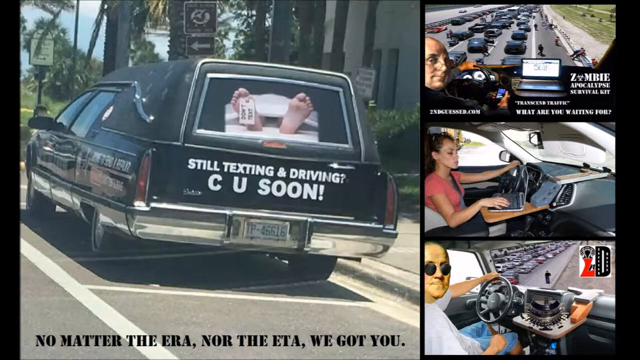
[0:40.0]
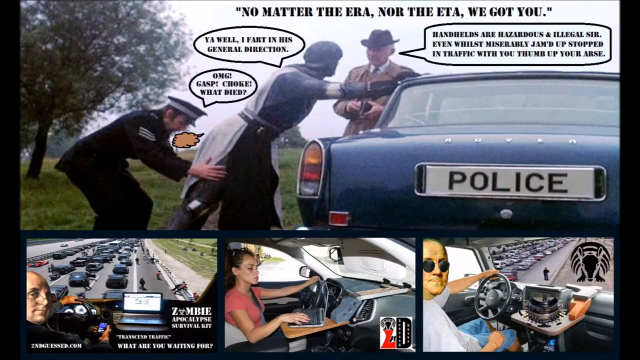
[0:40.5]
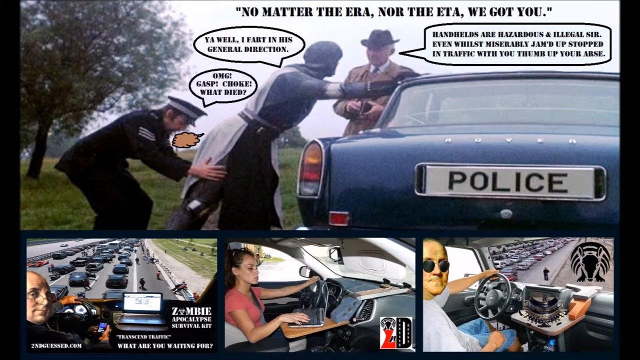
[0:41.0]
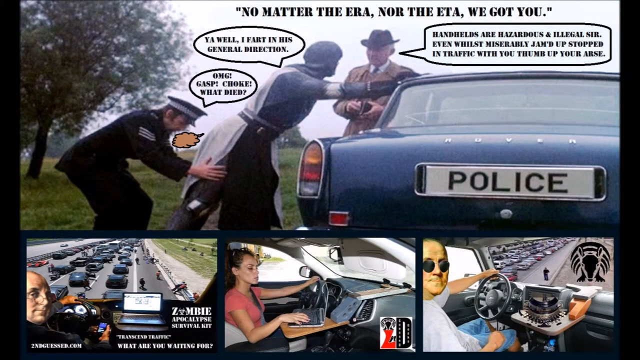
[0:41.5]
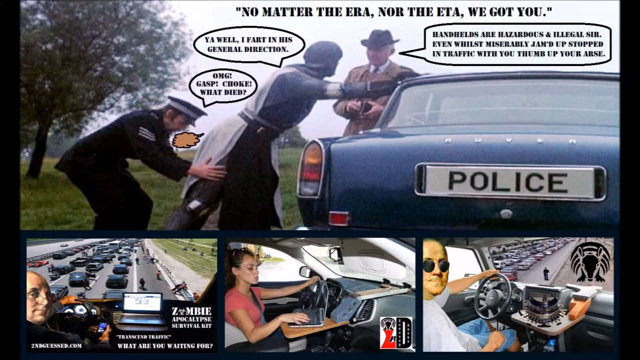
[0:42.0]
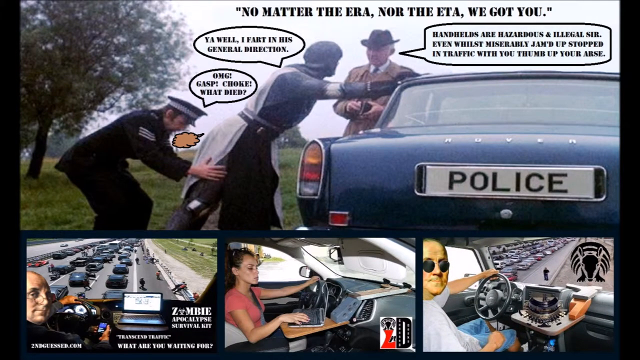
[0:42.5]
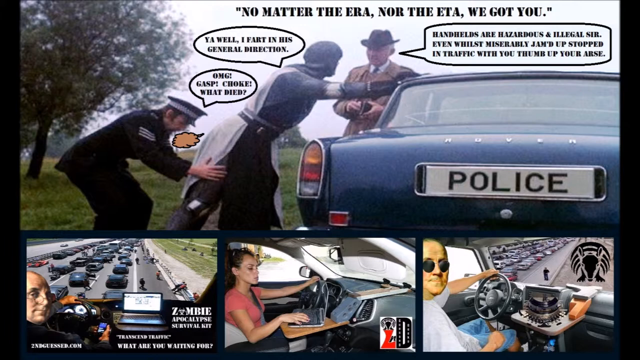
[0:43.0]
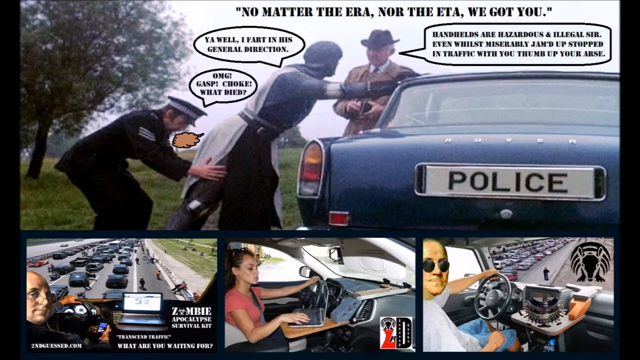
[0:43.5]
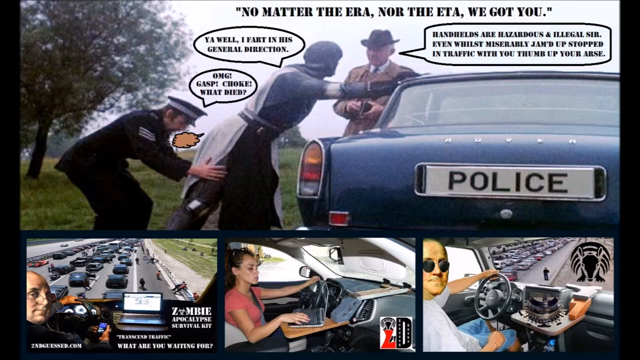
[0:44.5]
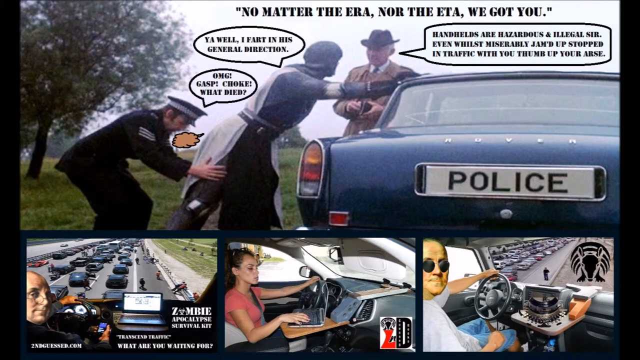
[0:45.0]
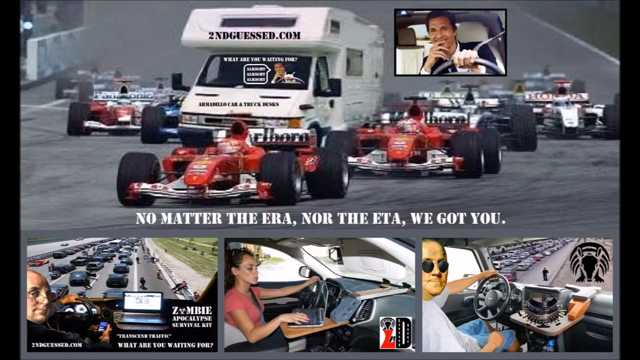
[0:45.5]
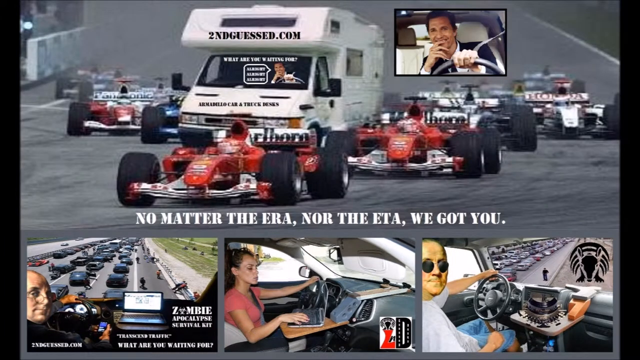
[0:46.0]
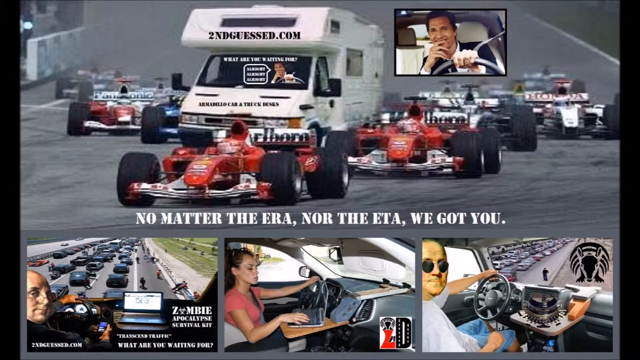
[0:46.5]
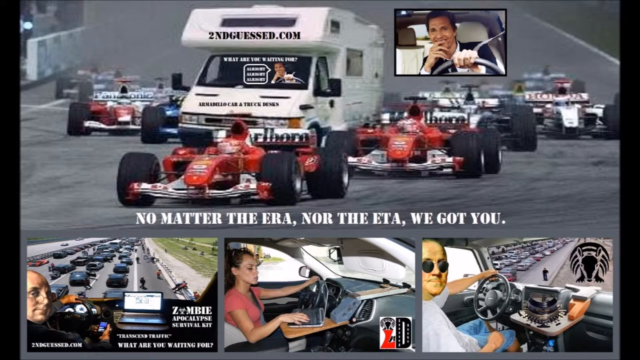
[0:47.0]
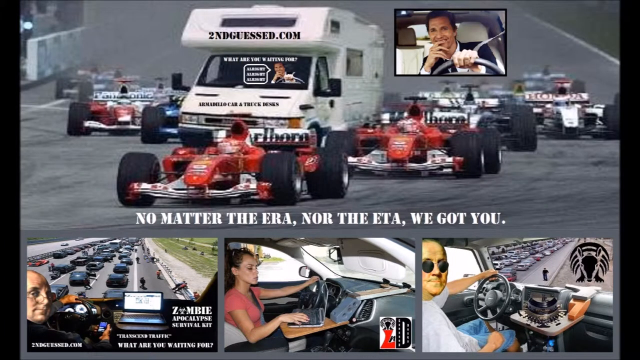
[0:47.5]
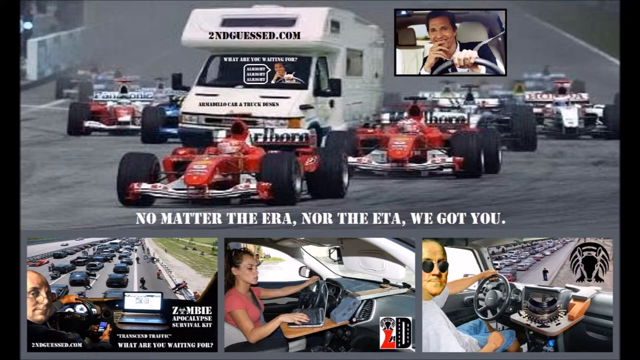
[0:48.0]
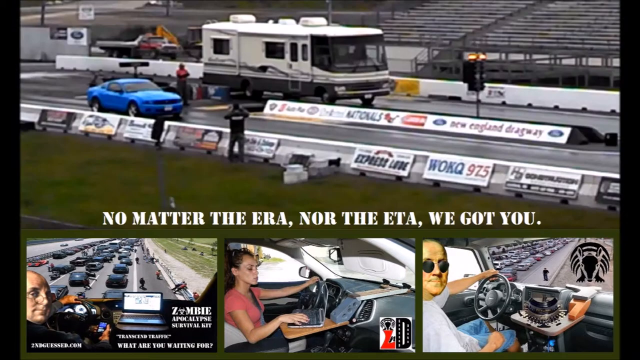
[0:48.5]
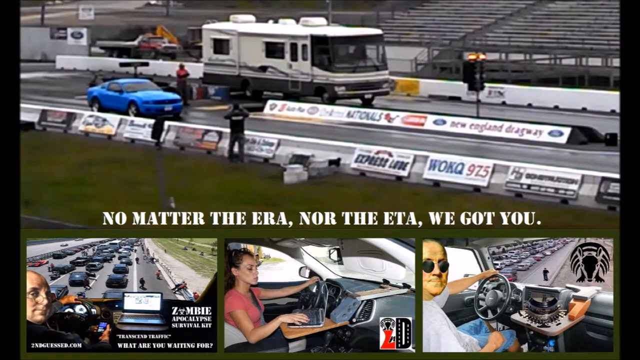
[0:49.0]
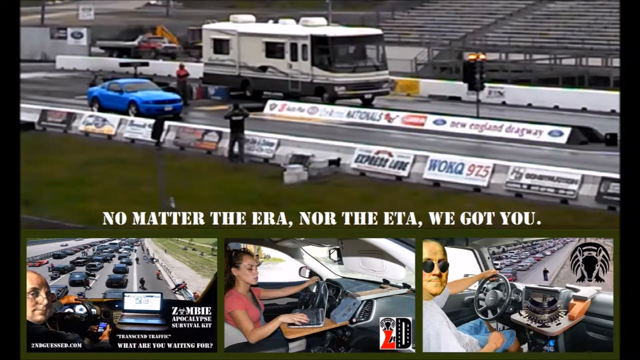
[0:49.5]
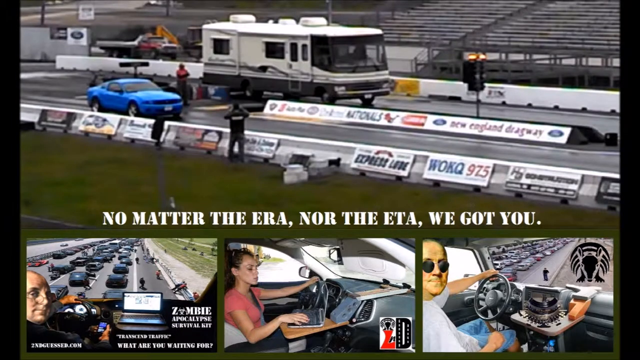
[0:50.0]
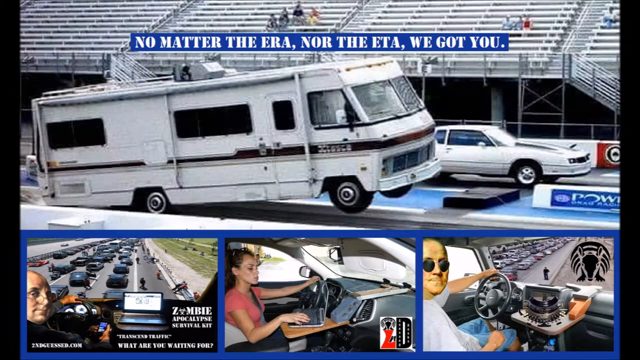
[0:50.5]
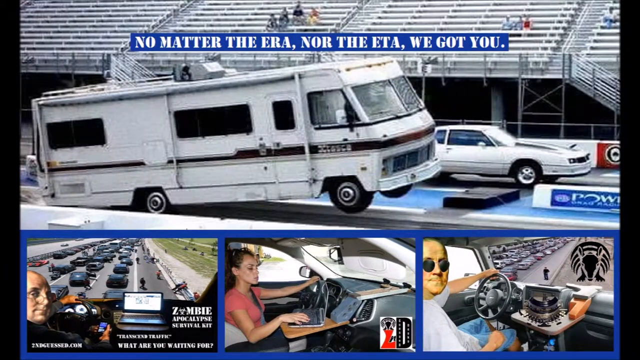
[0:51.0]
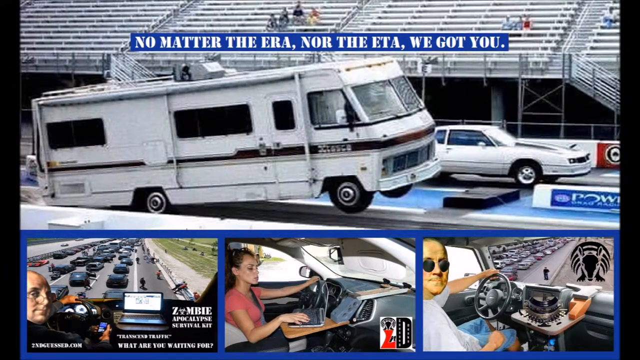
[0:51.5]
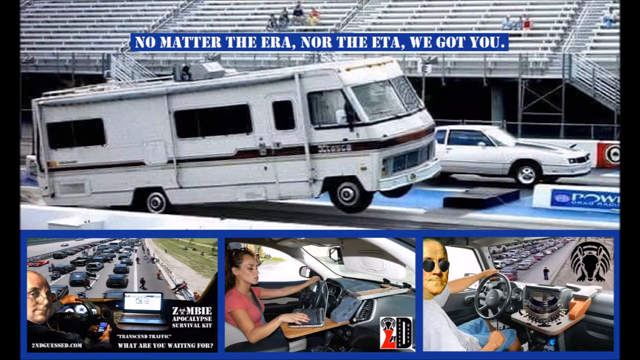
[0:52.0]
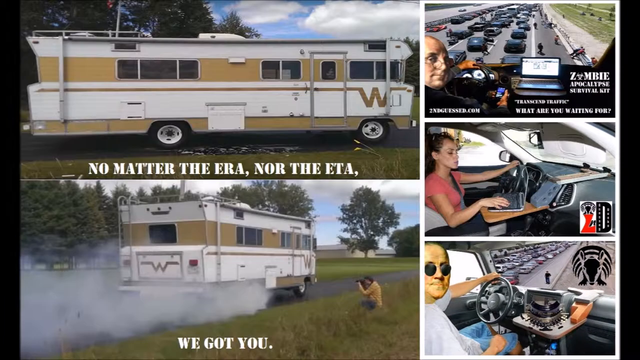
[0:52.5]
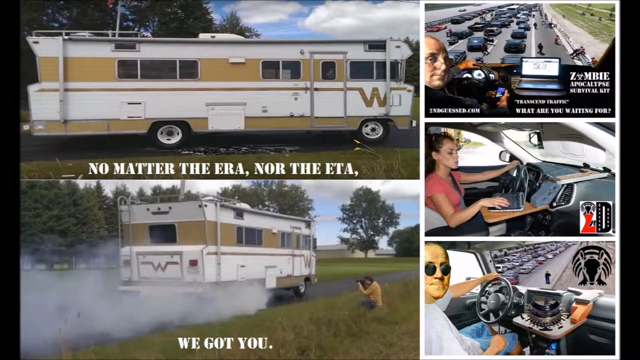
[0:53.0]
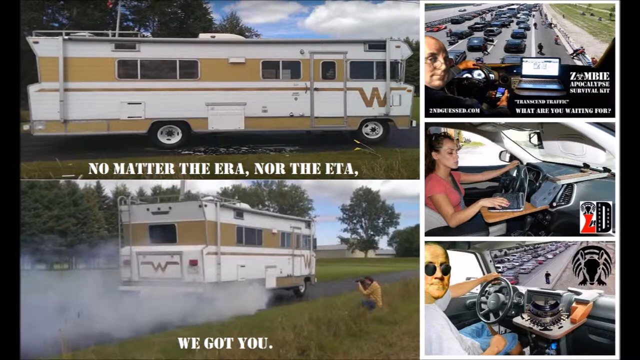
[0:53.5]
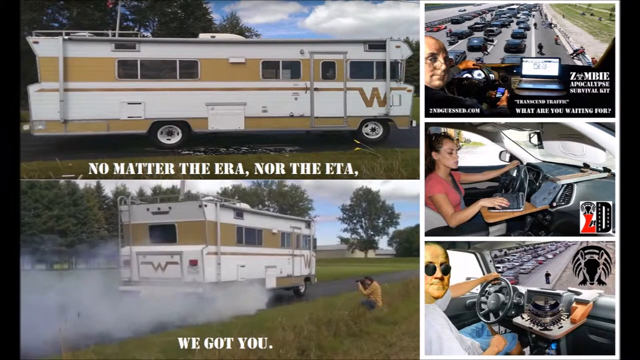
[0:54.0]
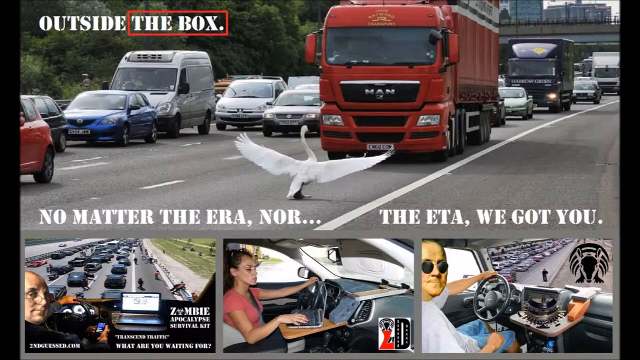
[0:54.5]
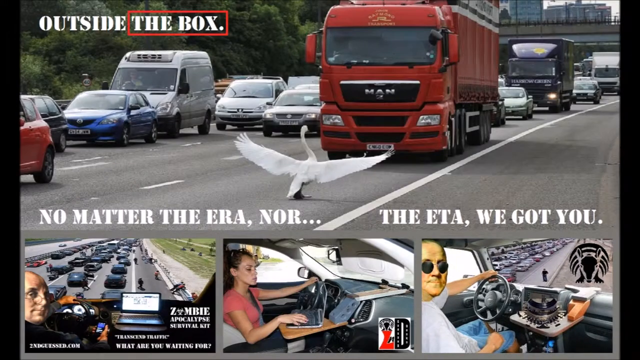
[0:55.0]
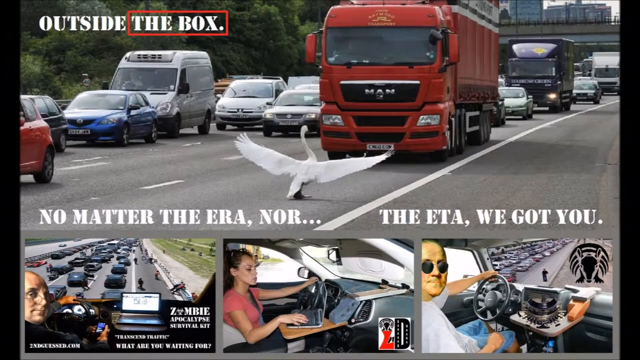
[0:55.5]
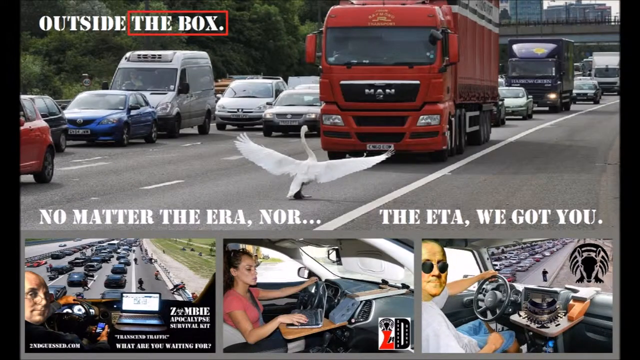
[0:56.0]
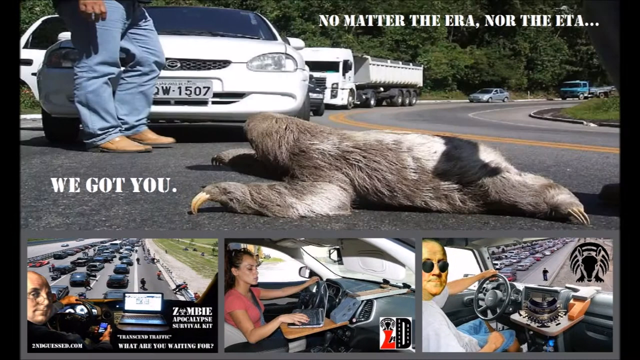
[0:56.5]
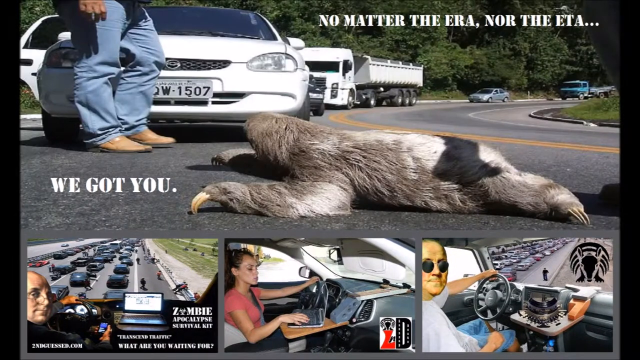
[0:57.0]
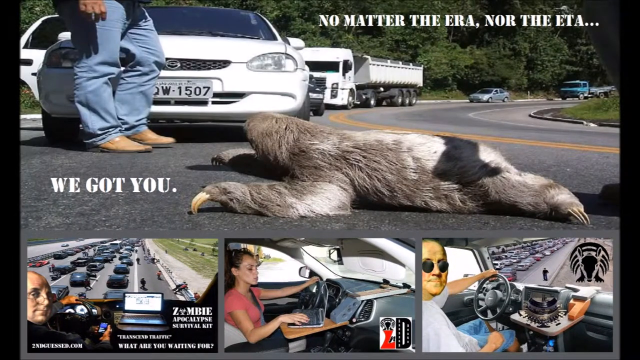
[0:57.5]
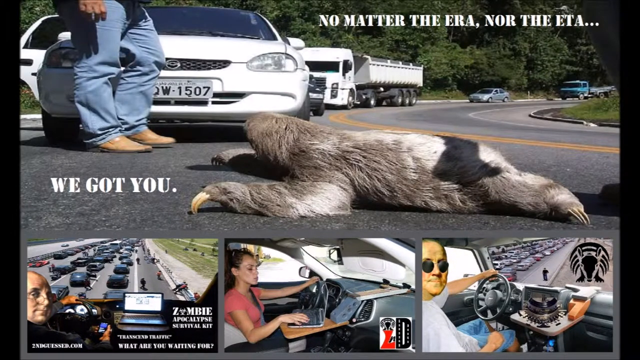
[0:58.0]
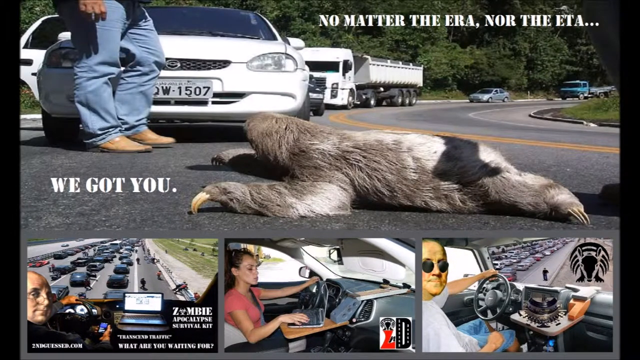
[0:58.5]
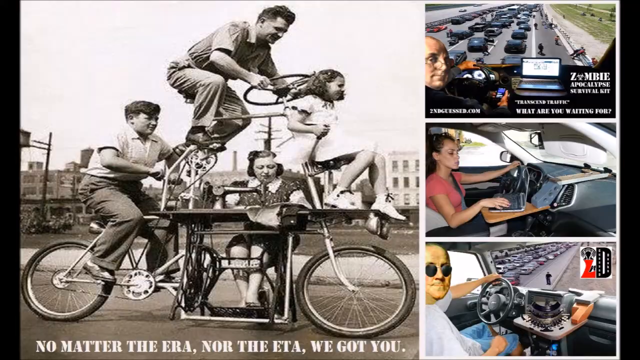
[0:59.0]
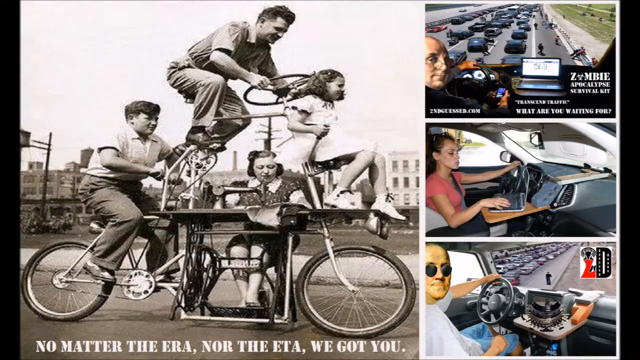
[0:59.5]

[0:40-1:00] A Rover police car appears, apparently British police, and a policeman is shaking down someone he has pulled over. The policeman appears to be complaining, saying "oh my god, gasp, choke, what happened?", and the person he is dealing with says "yeah, well, I fart in his general direction". The next picture shows Formula One cars with a sort of Winnebago driving among them and the inscription "secondguest.com". Another Winnebago is on the start line, apparently of a motor race, set to race a blue sports car. Next, a Winnebago is off balance, with its front wheels up in the air and its back wheels very low, the back of the Winnebago touching the ground. Another, much older Winnebago is cream and white, its exhaust belching smoke. A swan blocks traffic in front of a big red lorry. Then something else blocks traffic and causes a traffic jam, and someone has gone out to watch it. Finally, a bicycle carries a whole family on different levels, with two people at ground level and two people higher up.